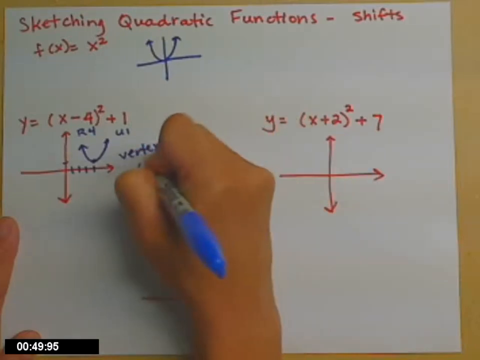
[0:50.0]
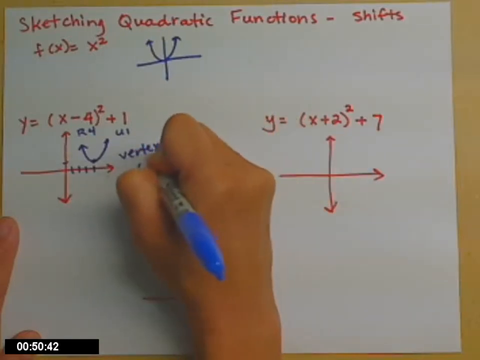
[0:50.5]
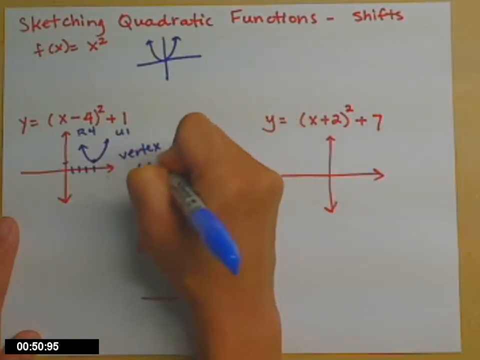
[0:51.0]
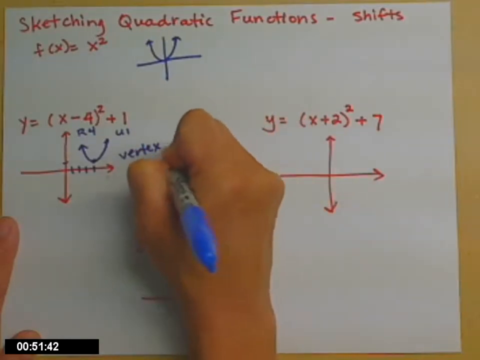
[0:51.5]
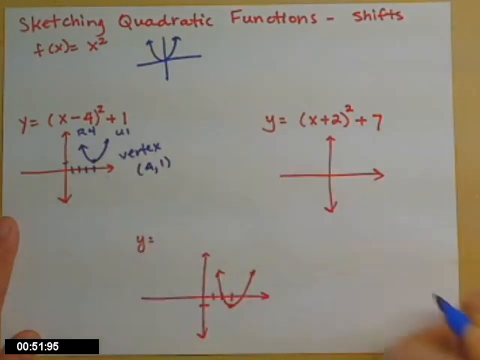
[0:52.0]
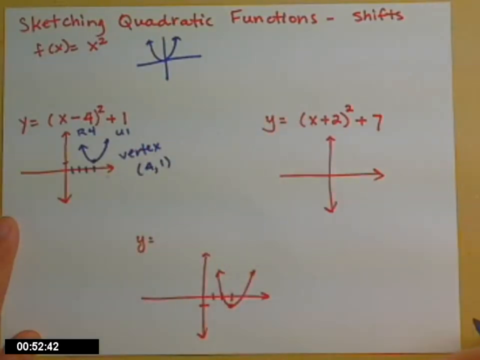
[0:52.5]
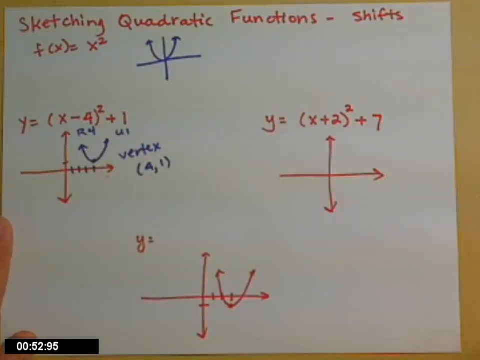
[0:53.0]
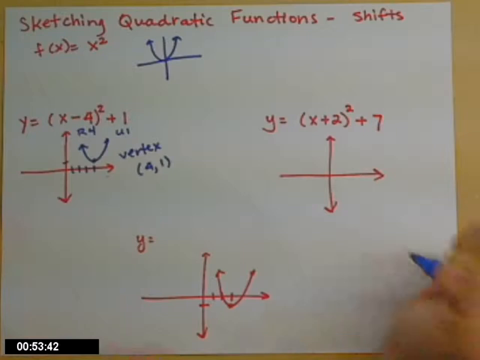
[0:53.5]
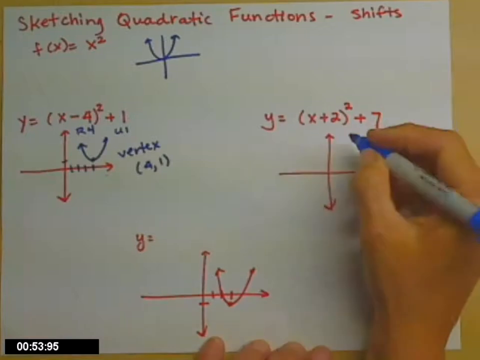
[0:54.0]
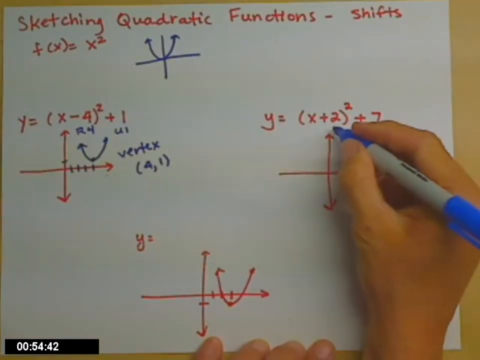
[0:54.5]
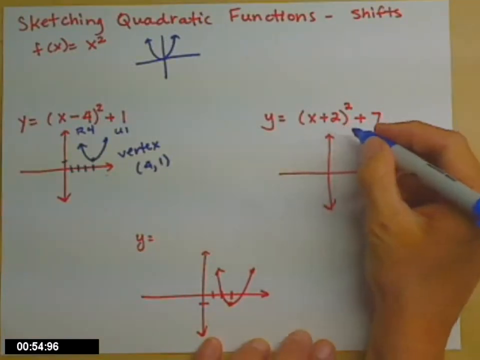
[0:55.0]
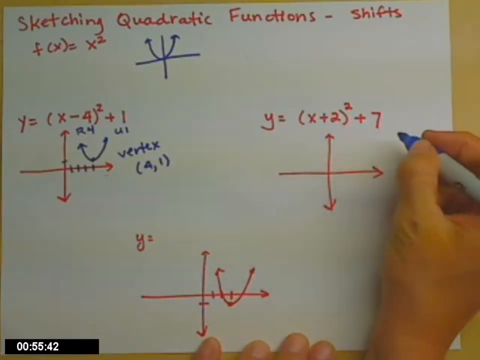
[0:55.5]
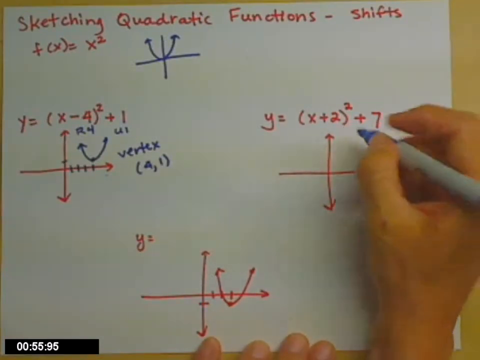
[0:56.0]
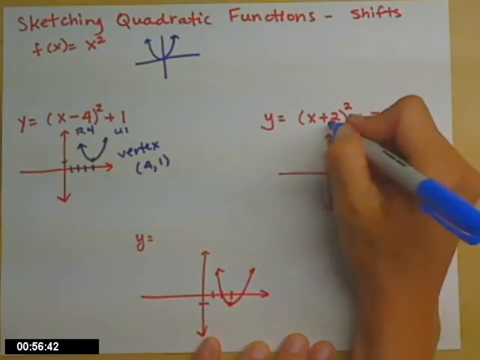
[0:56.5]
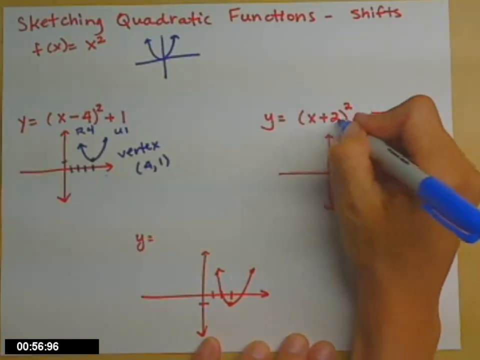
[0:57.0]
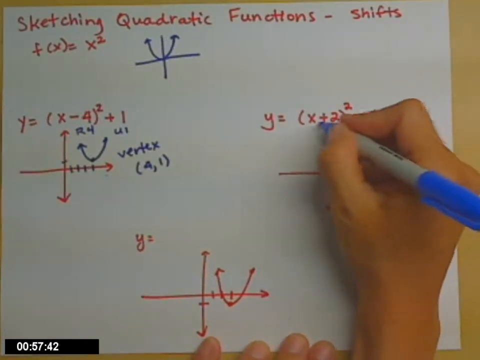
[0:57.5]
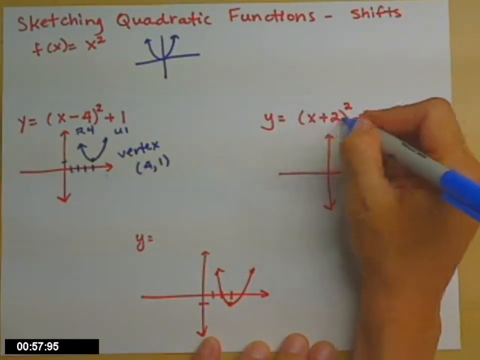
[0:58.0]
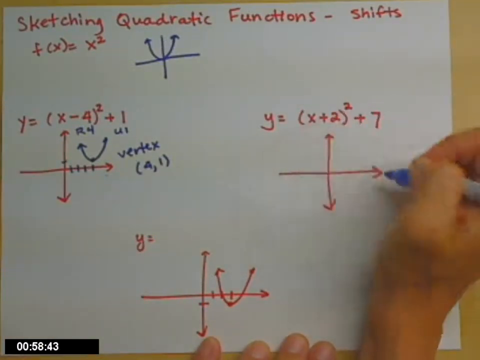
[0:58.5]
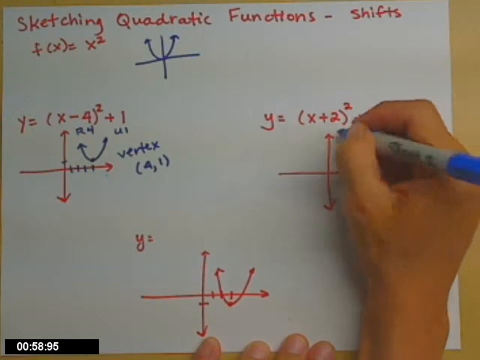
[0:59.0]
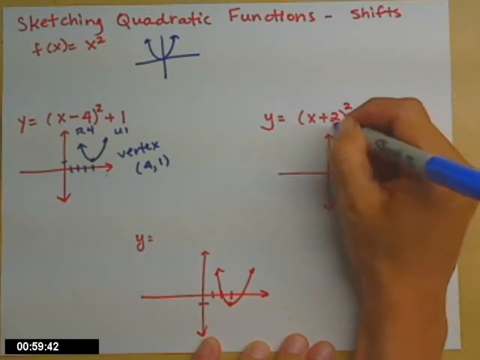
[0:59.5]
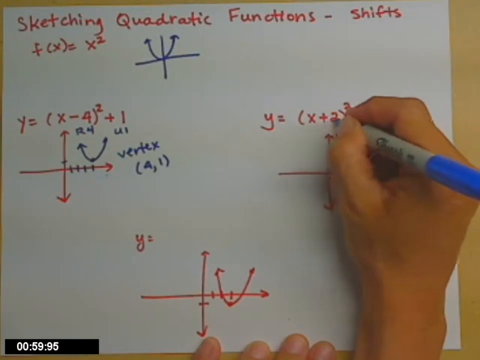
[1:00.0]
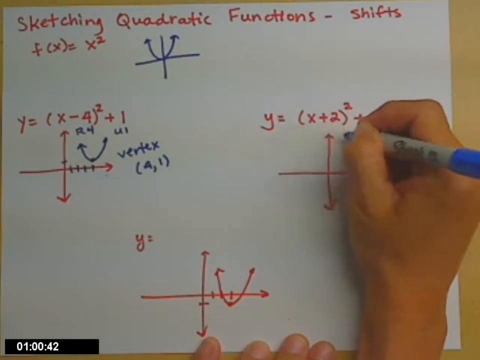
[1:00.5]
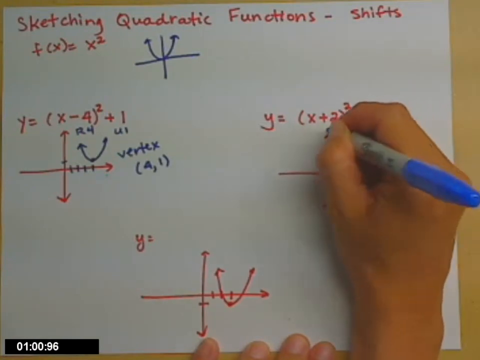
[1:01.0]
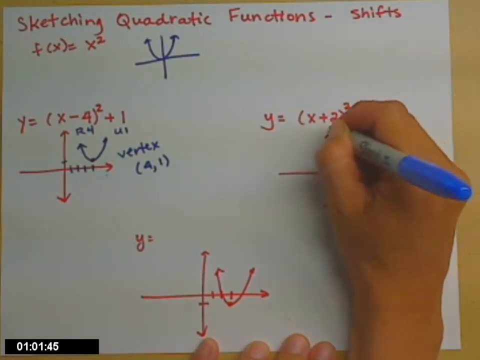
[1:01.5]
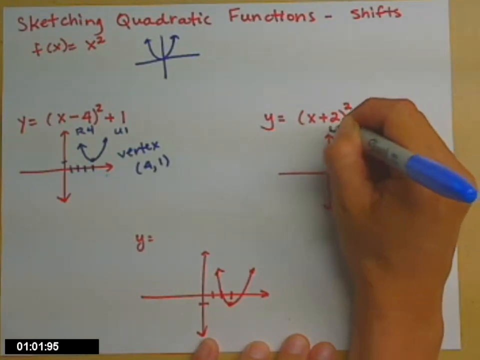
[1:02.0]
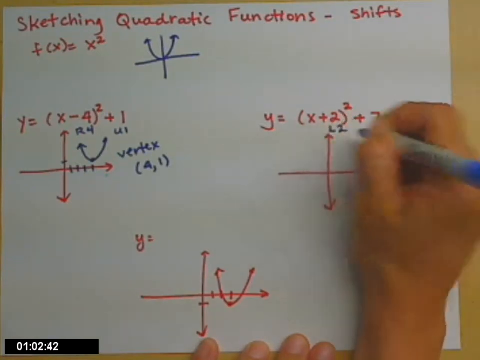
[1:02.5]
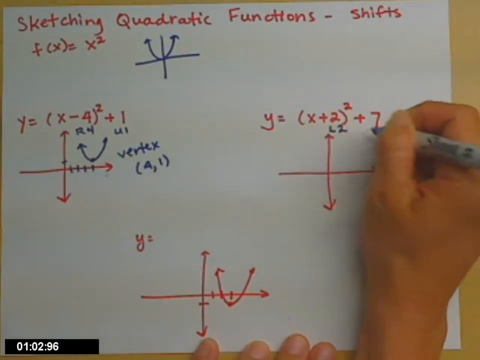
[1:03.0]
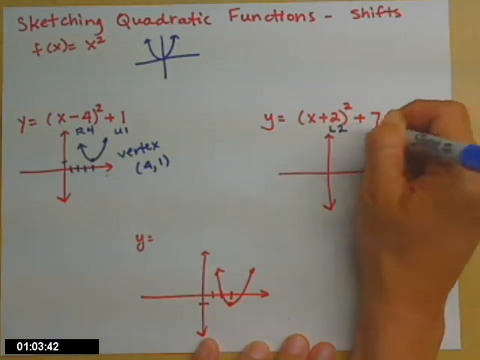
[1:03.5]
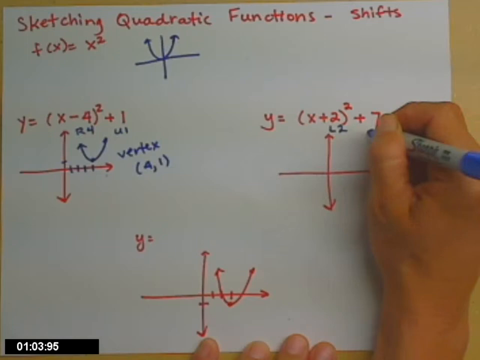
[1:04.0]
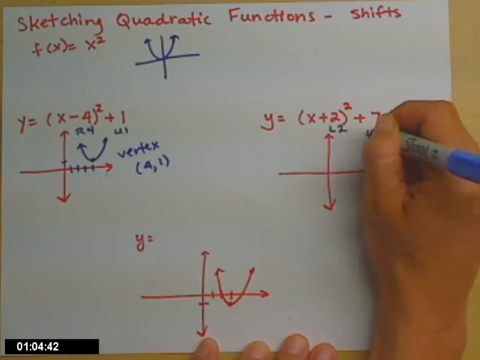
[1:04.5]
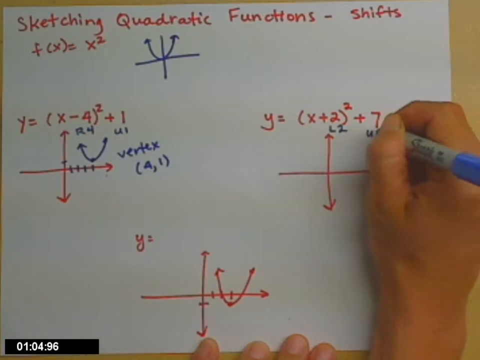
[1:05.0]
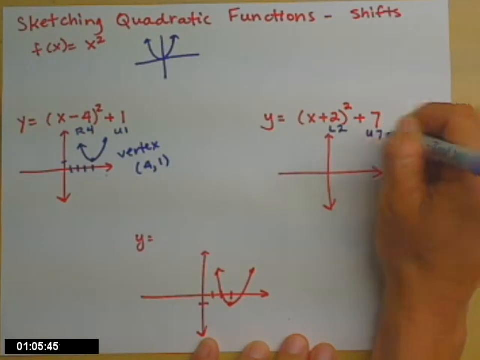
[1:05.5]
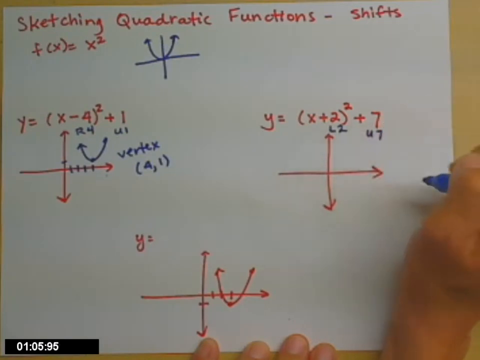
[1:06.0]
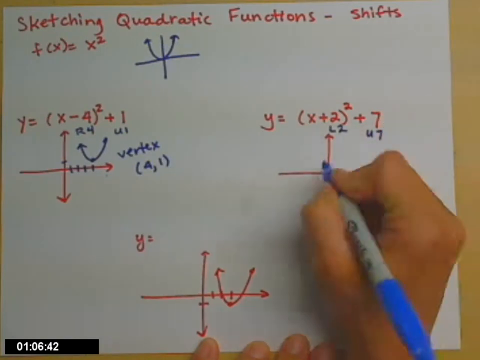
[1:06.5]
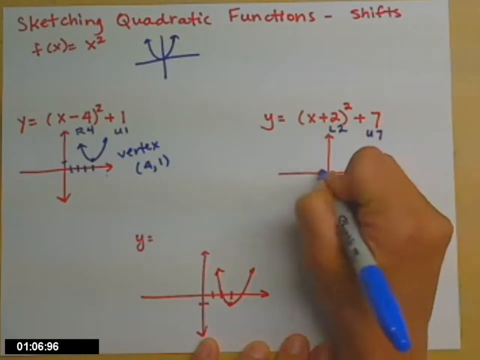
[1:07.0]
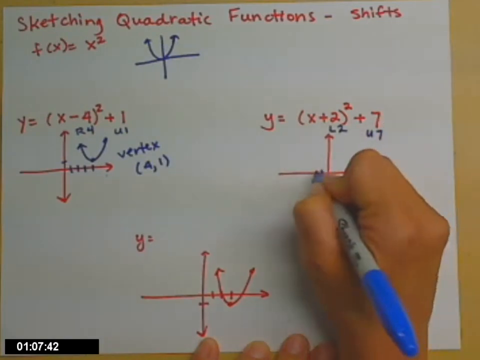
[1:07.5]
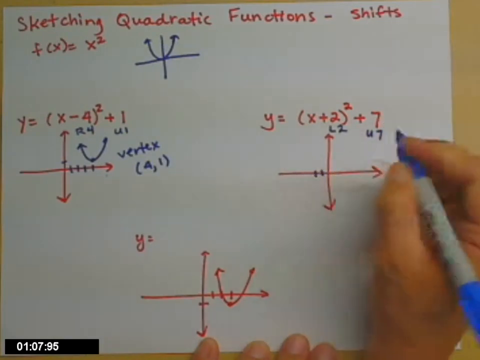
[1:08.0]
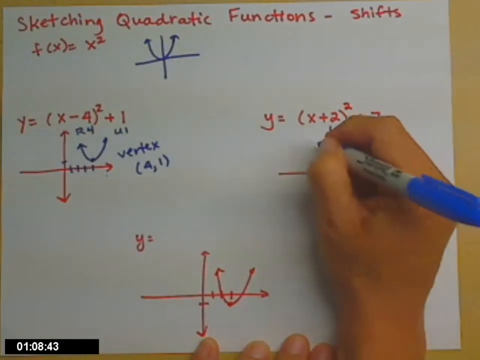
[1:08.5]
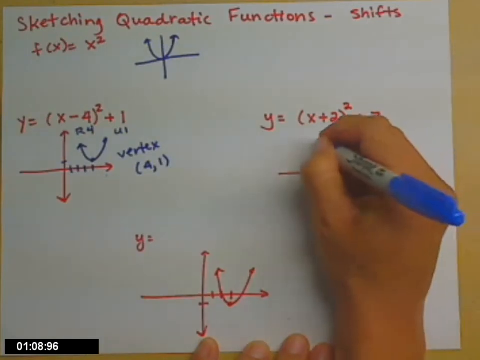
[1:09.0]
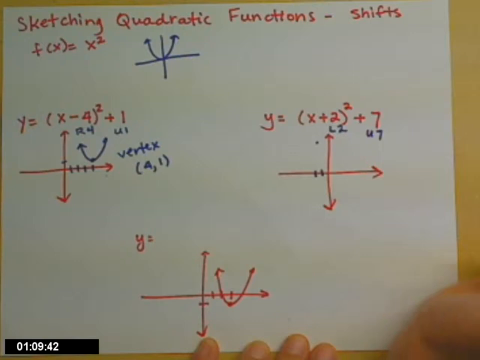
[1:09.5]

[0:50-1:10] Underneath the word "VERTEX", on the left-hand side, they have written "(4 2 1)". They move their hand back down to the right-hand corner of the screen, still holding the pen; then the hand disappears and only the tip of the pen is visible in the bottom right-hand corner. They raise their hand back up and go to the second sum, in the right-hand middle section of the screen, pointing the pen at "(X + 2)" and then underneath the number 2. Underneath the 2 they write "L2" in blue pen, and underneath the 7 they write "U7". They then draw vertical lines down the horizontal arrow and draw a dot above the vertical lines.